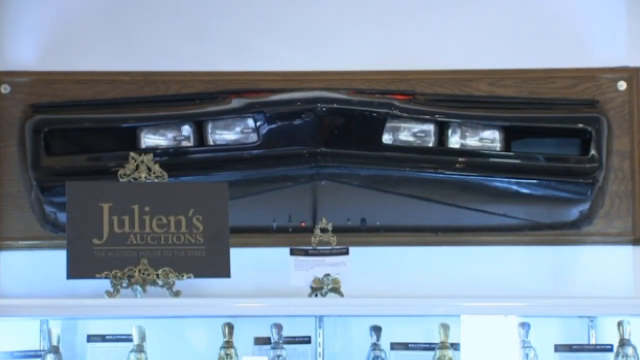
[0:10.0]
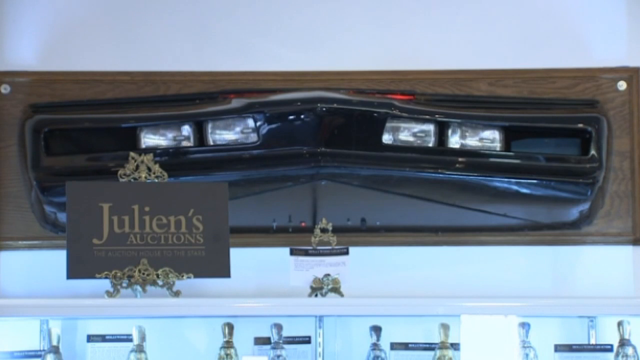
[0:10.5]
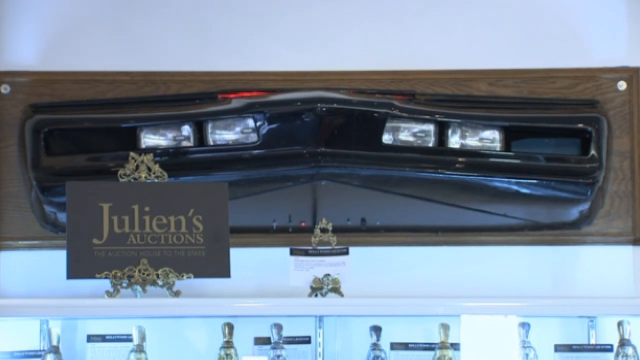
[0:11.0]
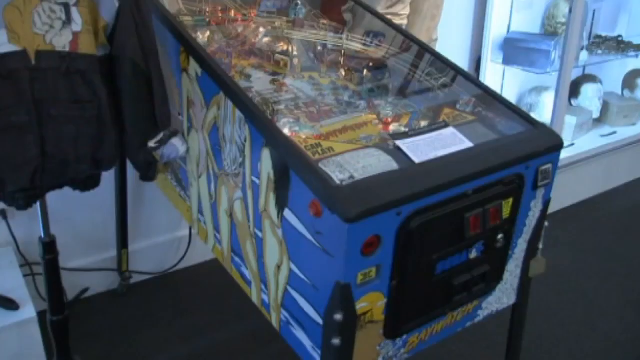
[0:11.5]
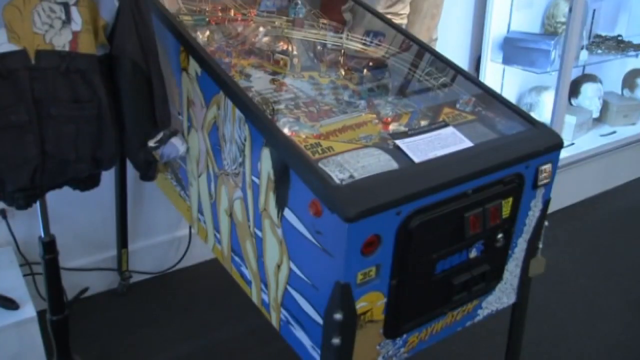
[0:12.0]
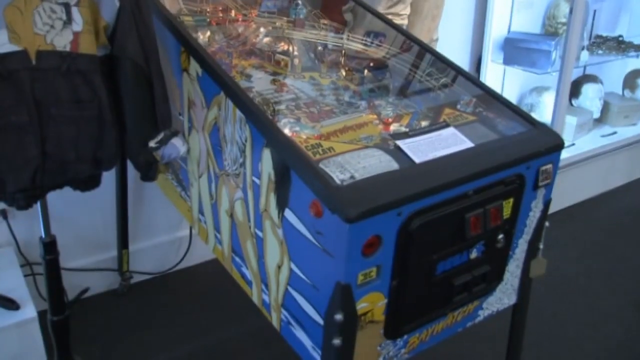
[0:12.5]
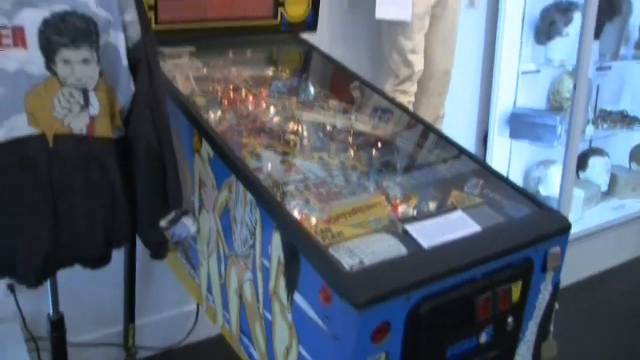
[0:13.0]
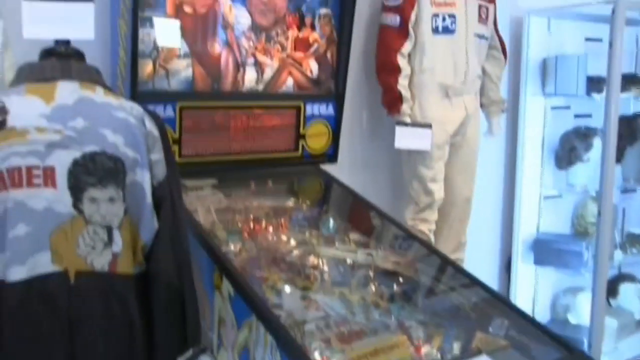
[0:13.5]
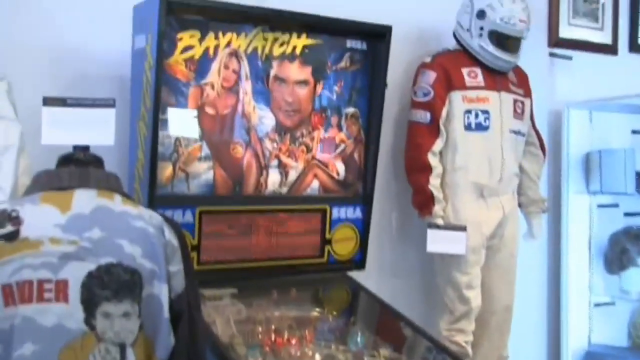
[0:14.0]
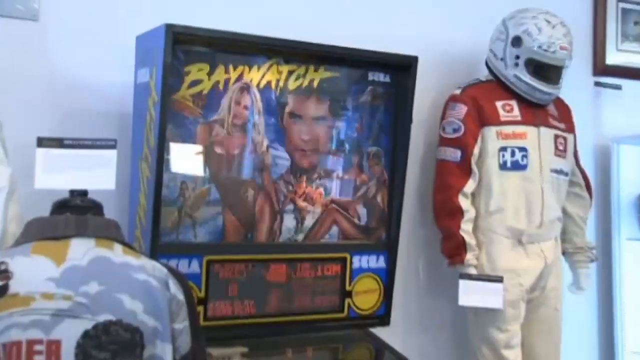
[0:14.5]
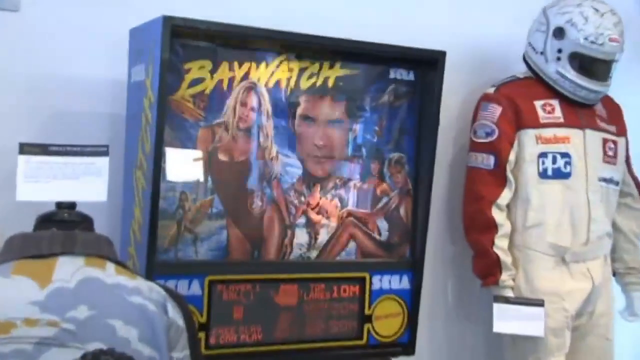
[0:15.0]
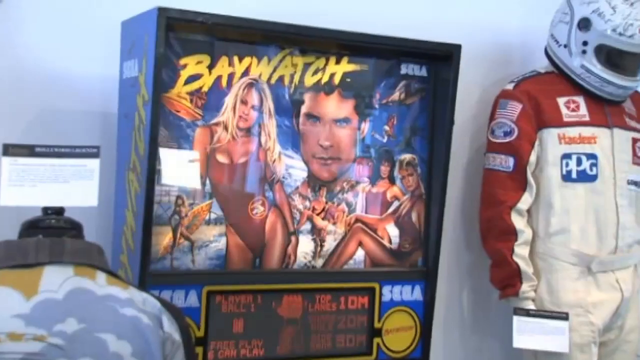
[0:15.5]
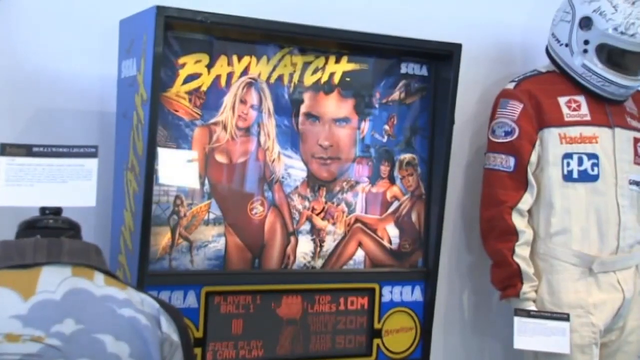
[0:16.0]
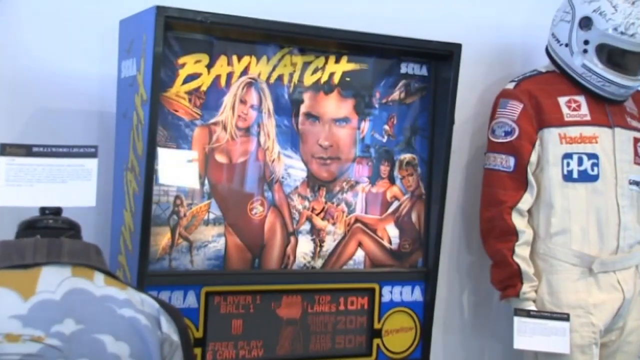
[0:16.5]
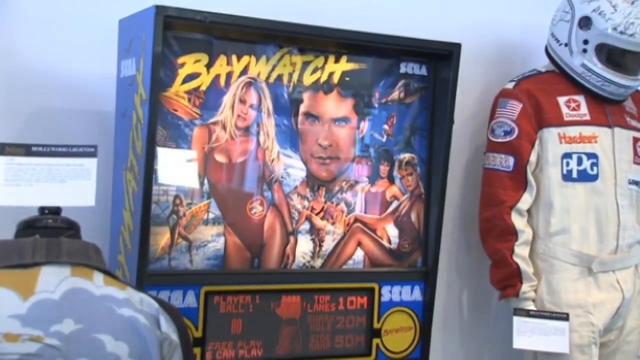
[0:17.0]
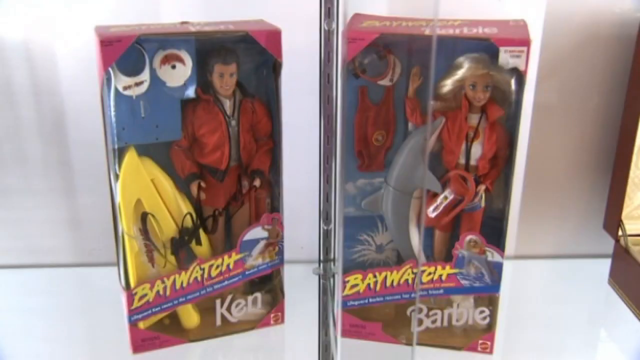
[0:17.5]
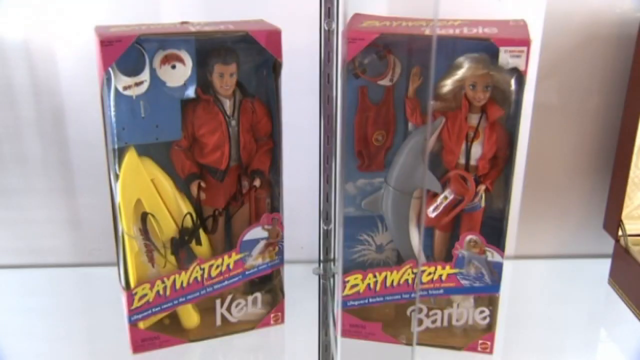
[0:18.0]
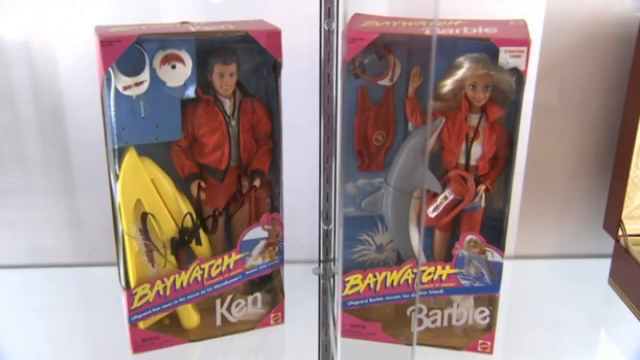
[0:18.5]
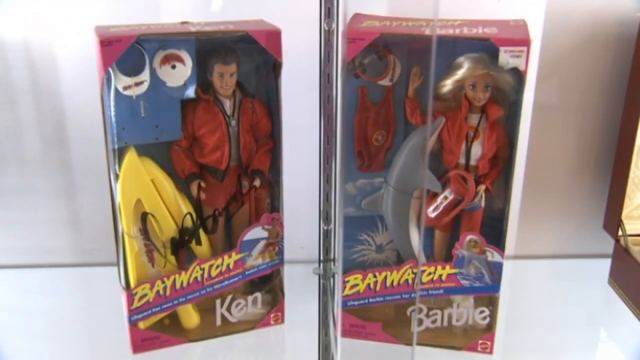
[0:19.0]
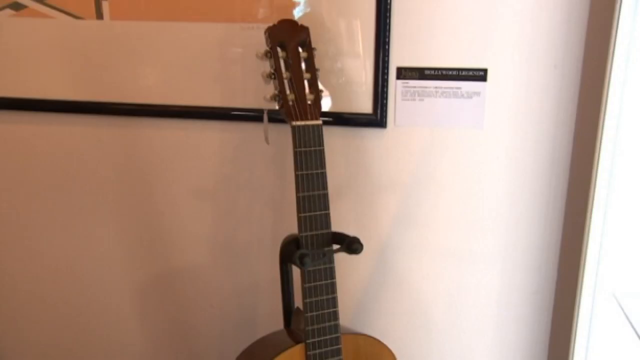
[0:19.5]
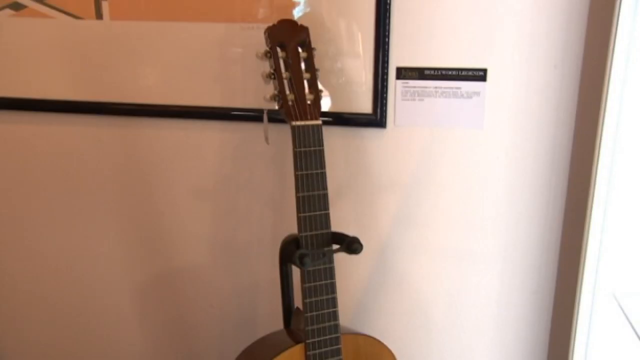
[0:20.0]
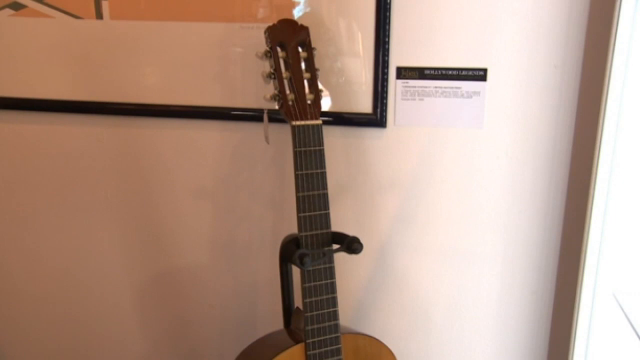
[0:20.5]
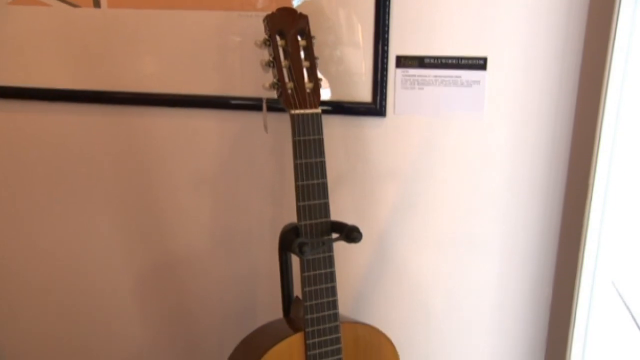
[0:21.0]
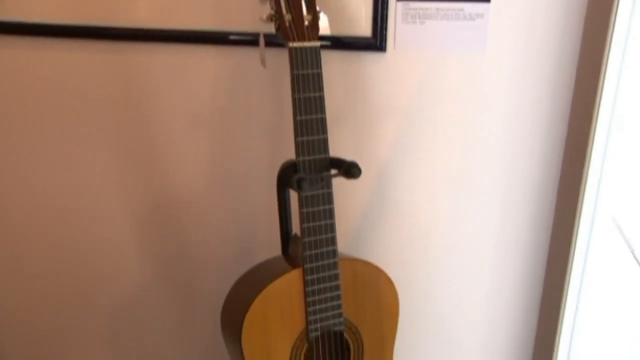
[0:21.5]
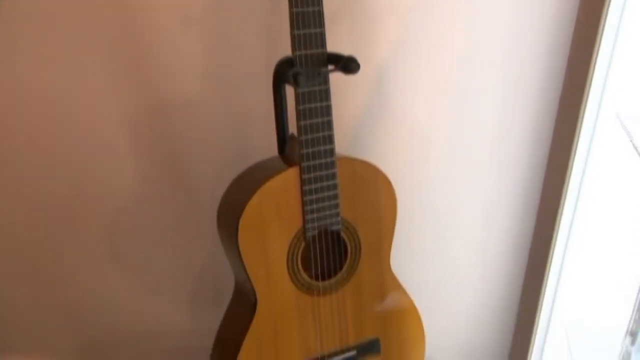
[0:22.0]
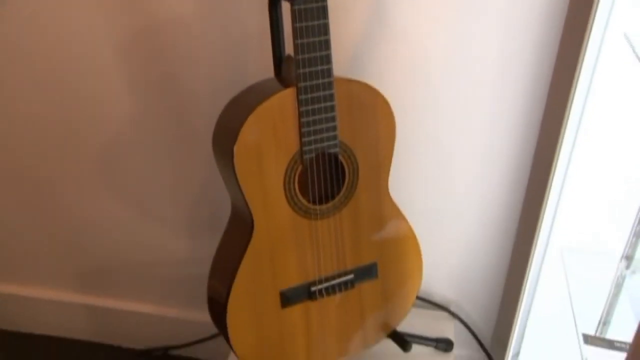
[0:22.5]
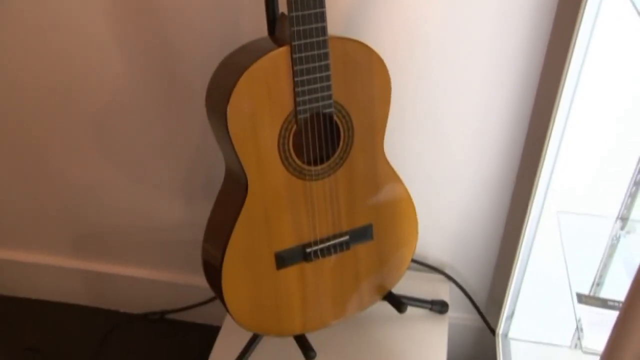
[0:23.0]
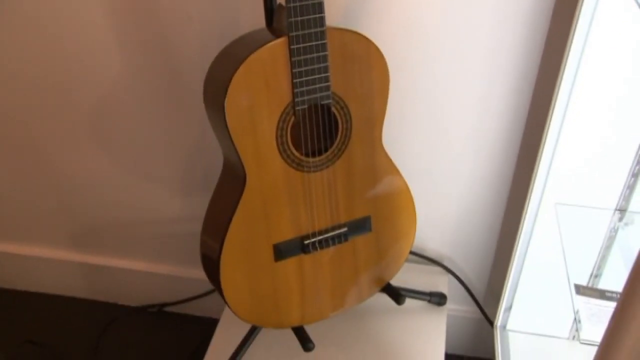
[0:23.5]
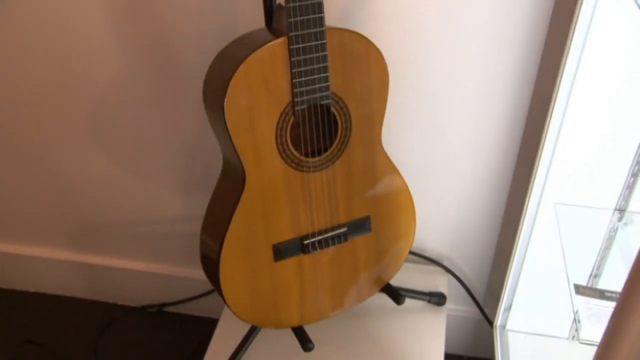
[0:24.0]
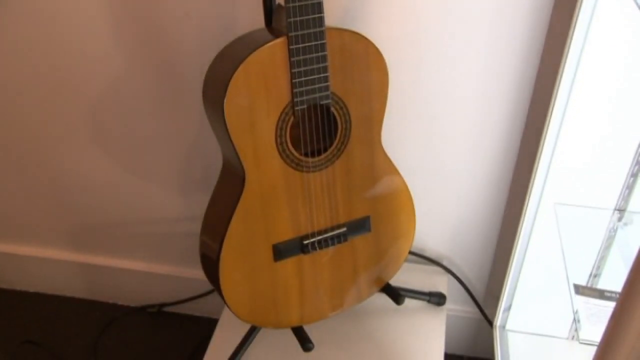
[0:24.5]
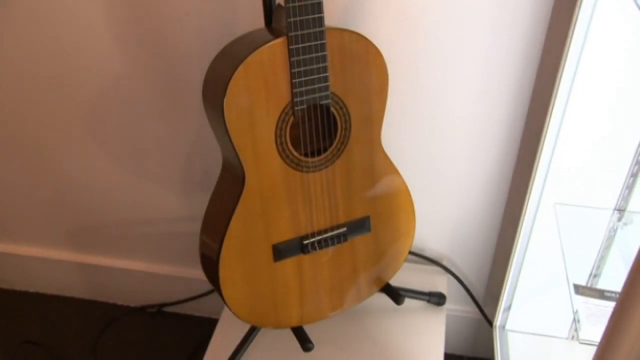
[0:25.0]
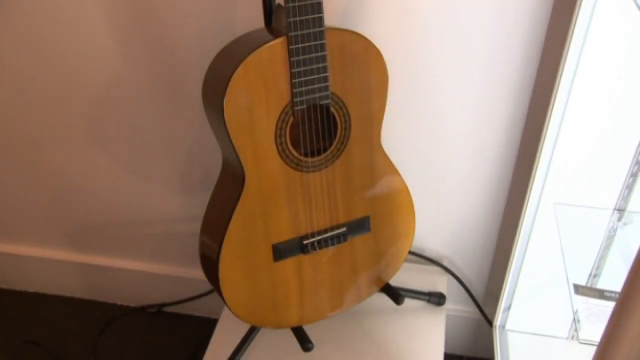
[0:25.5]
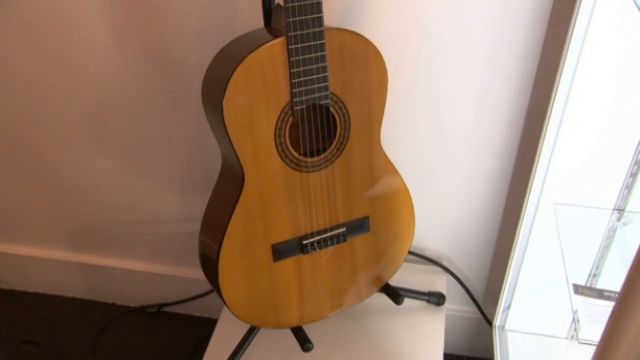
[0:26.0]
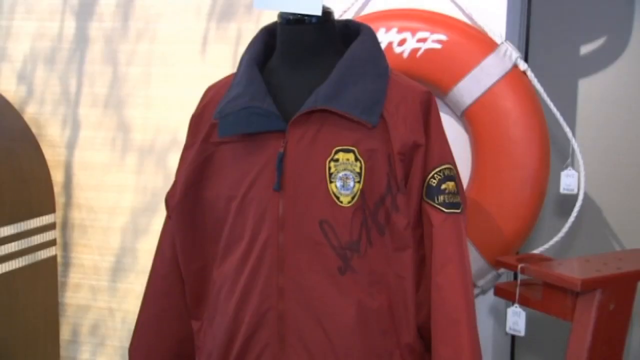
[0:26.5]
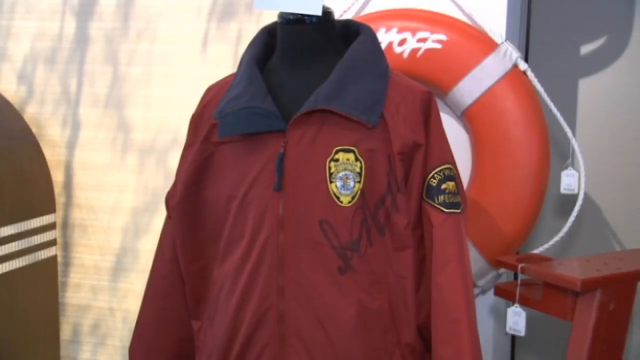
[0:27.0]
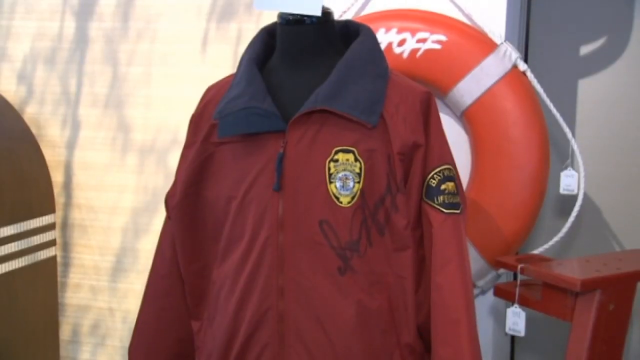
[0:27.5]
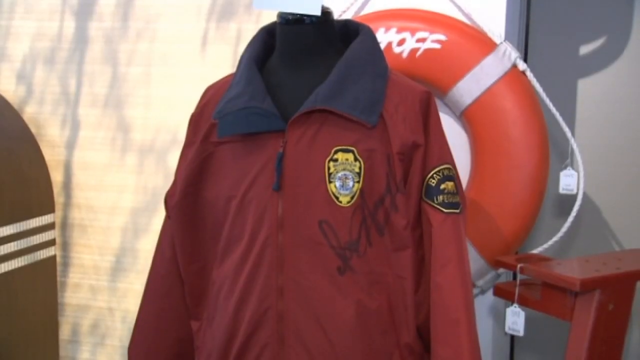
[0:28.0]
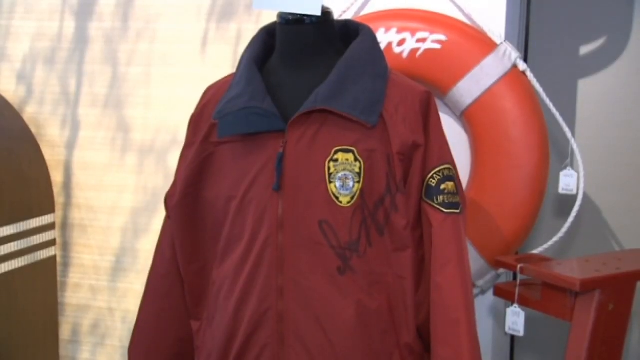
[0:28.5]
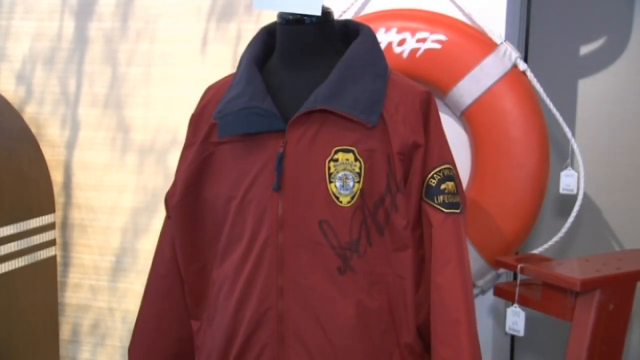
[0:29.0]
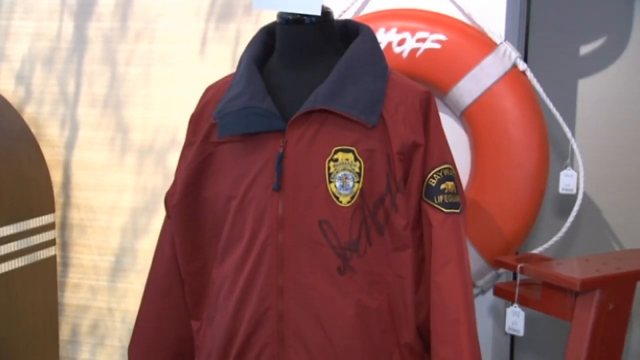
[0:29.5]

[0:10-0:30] The Julian's Auctions card appears with some police lights. Next comes a pinball machine; the camera pans up to reveal it is a Baywatch pinball machine. A Barbie doll set follows. On the left is a Ken doll made up as a lifeguard in the Baywatch lifeguard uniform, with what look like yellow flotation rescue devices to his left in the box and what looks like an accessory sun visor. On the right is a Baywatch Barbie in the standard Baywatch uniform, with an optional bathing suit and a visor in the accessory kit; she holds a lifesaving flotation device. The camera then cuts to a six-string acoustic guitar that looks like a Martin guitar, and finally to a California Baywatch lifeguard jacket, apparently signed by David Hasselhoff.